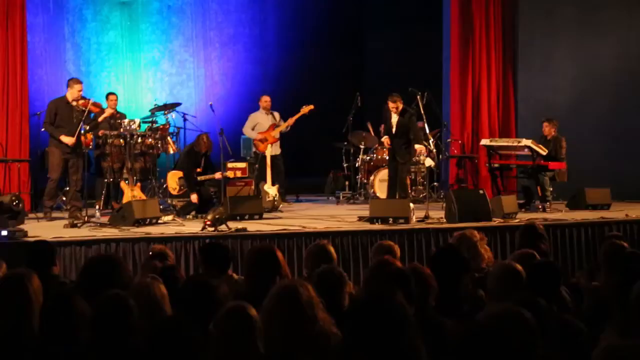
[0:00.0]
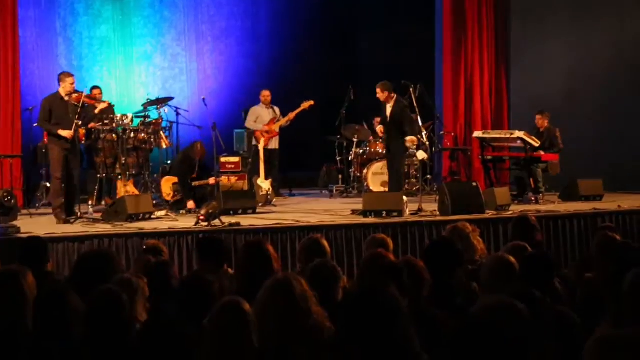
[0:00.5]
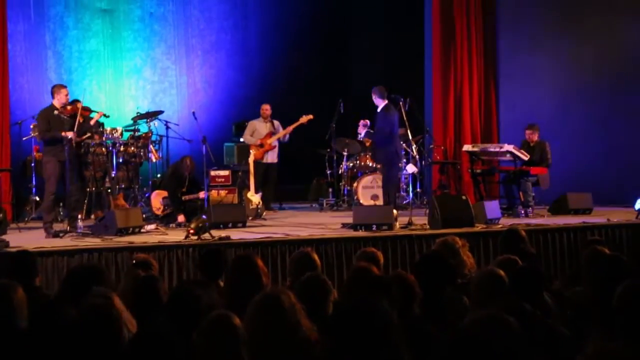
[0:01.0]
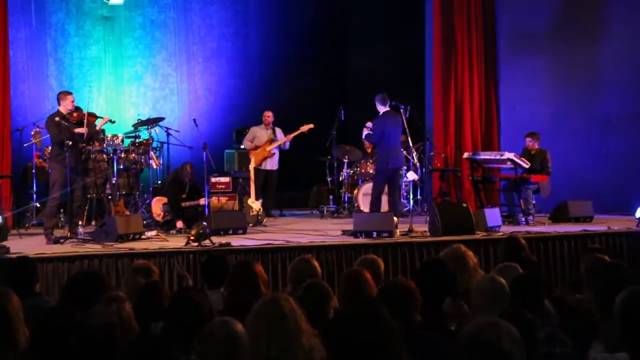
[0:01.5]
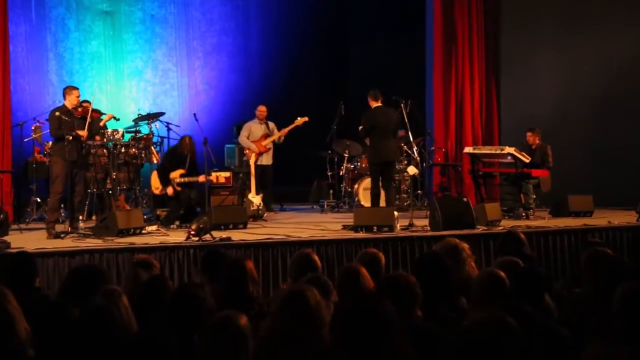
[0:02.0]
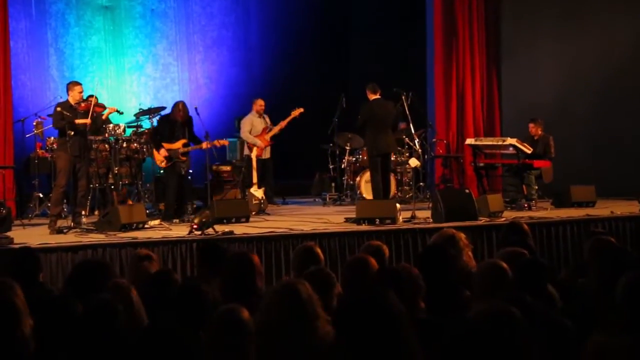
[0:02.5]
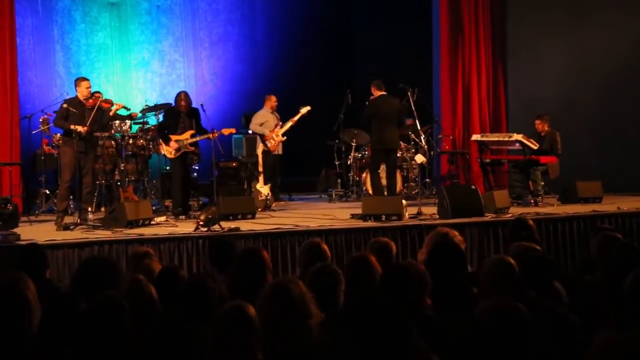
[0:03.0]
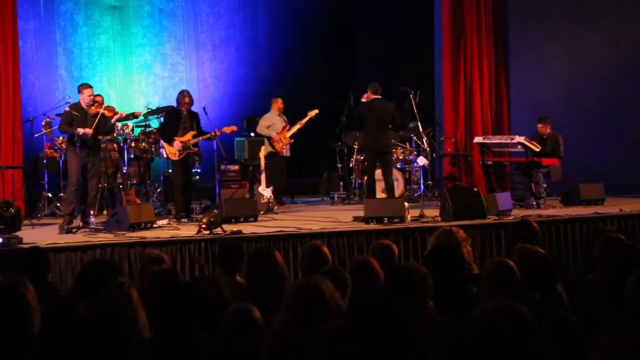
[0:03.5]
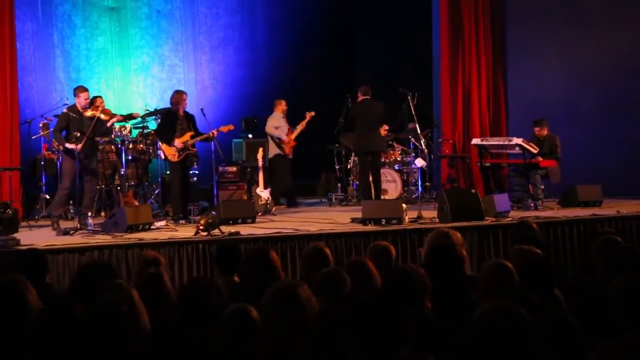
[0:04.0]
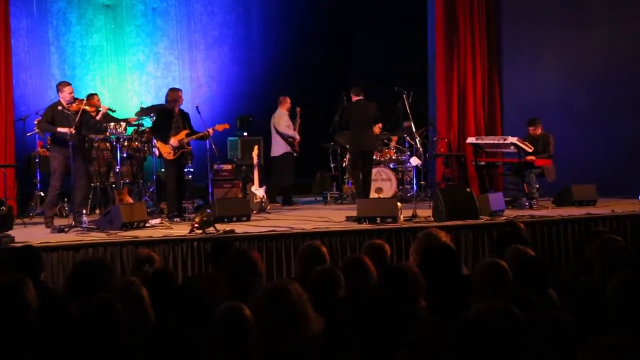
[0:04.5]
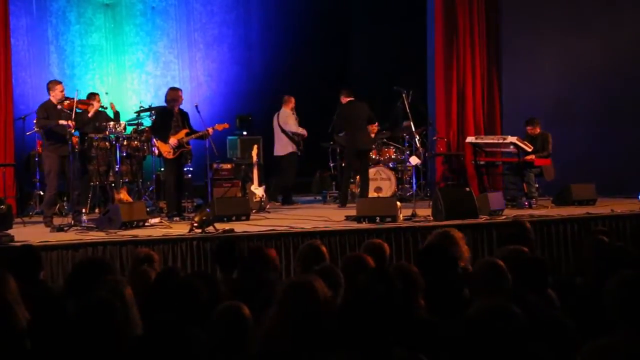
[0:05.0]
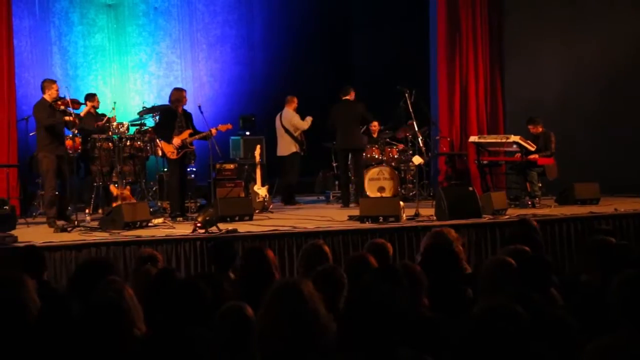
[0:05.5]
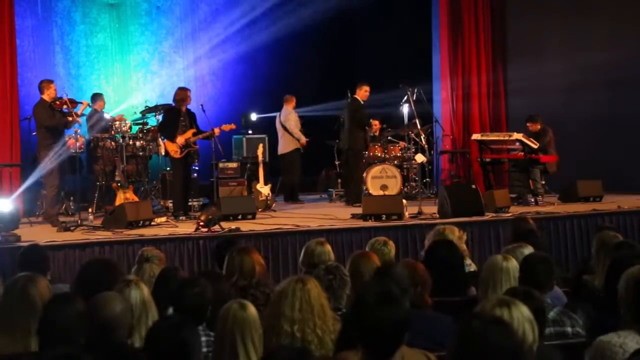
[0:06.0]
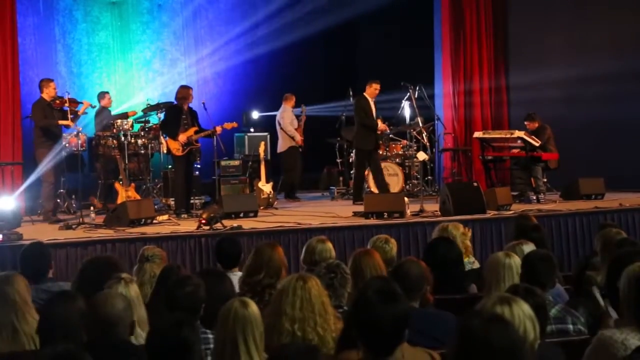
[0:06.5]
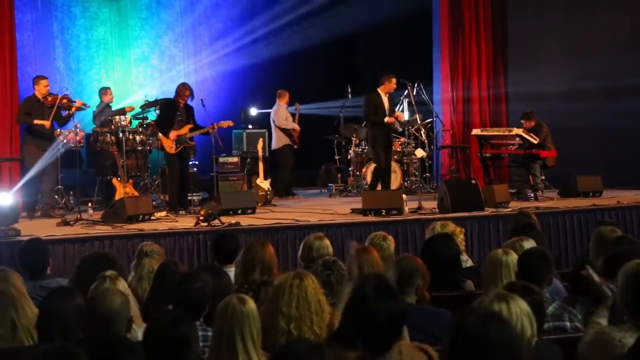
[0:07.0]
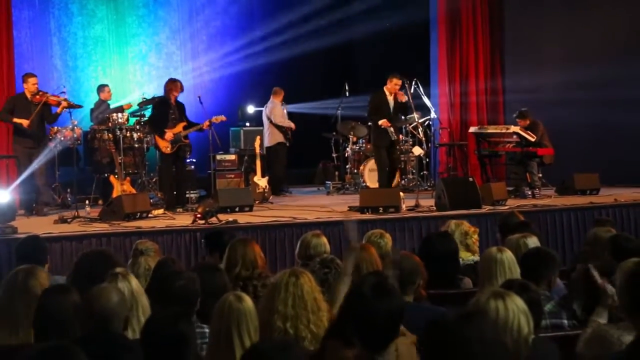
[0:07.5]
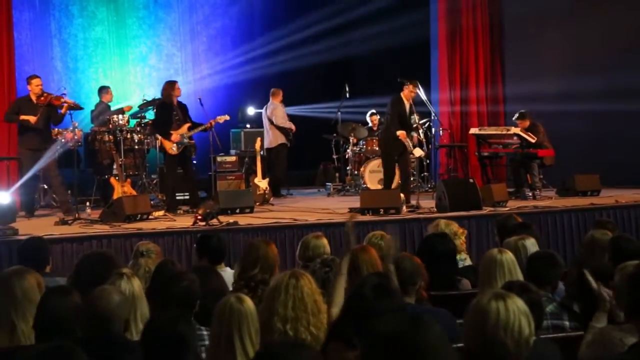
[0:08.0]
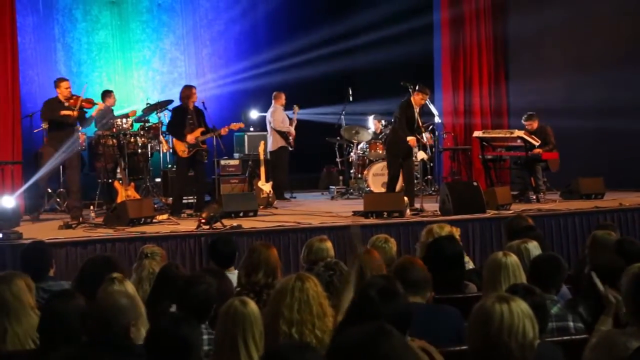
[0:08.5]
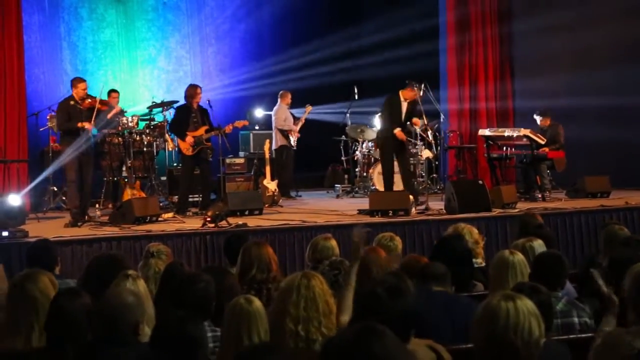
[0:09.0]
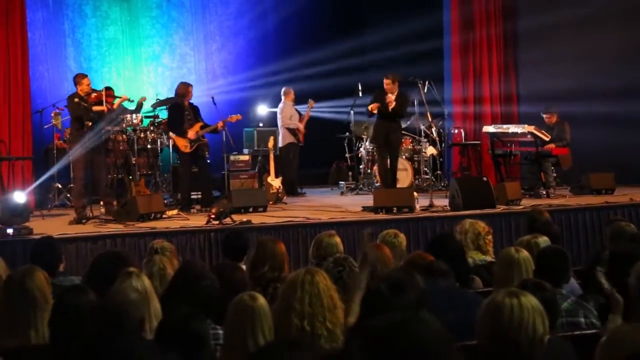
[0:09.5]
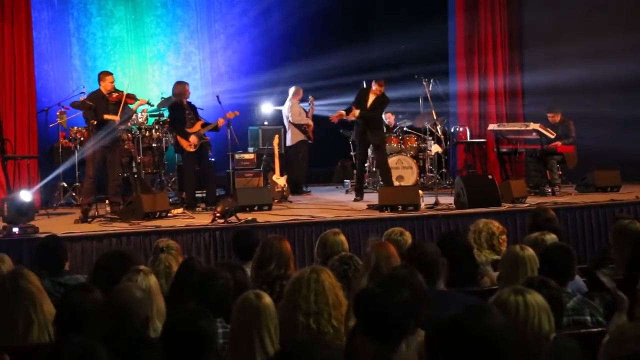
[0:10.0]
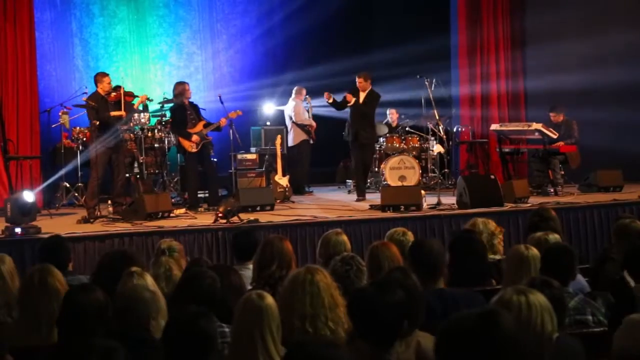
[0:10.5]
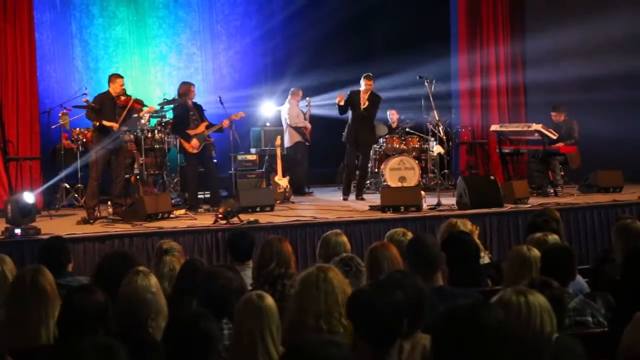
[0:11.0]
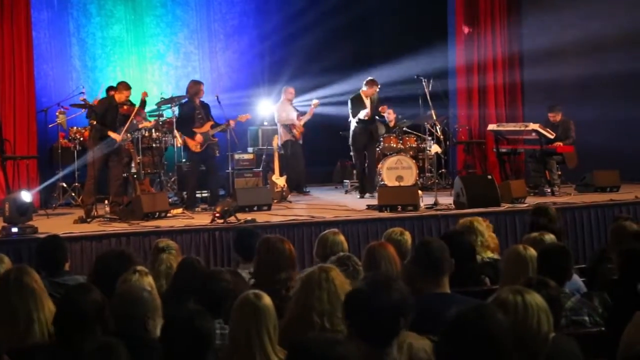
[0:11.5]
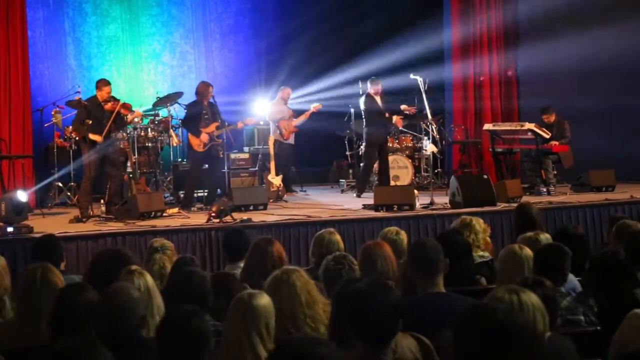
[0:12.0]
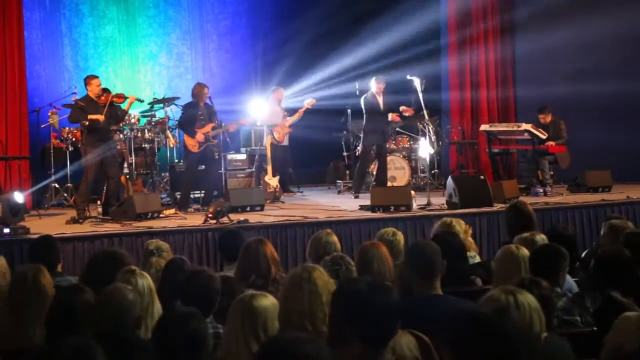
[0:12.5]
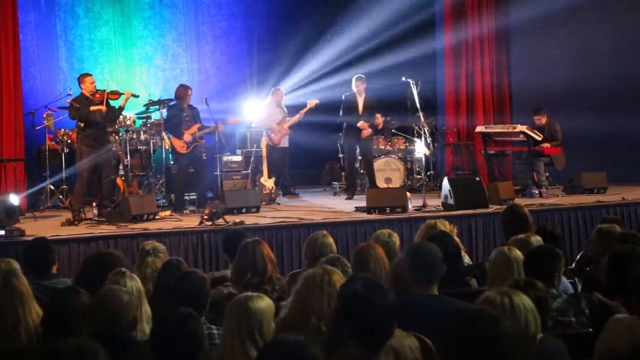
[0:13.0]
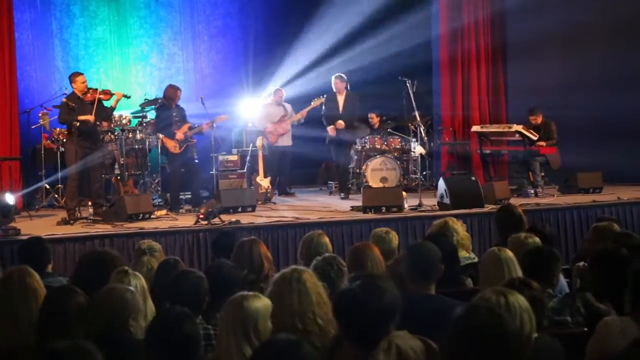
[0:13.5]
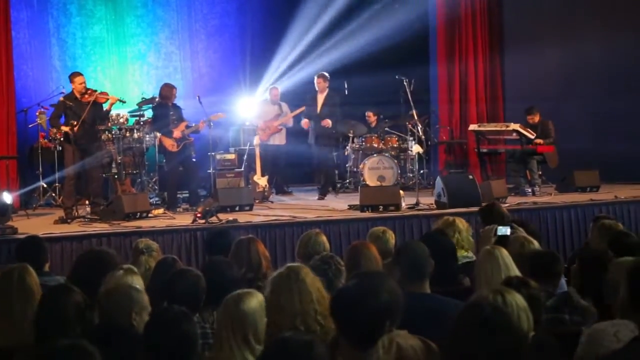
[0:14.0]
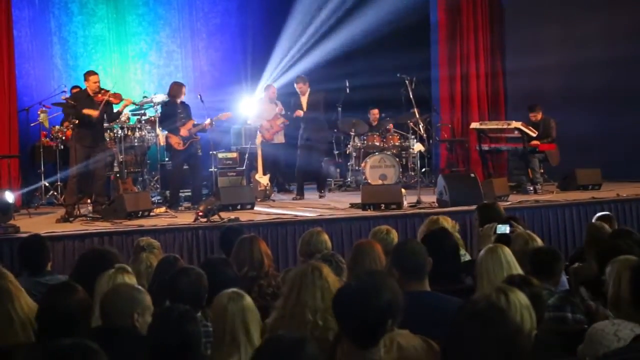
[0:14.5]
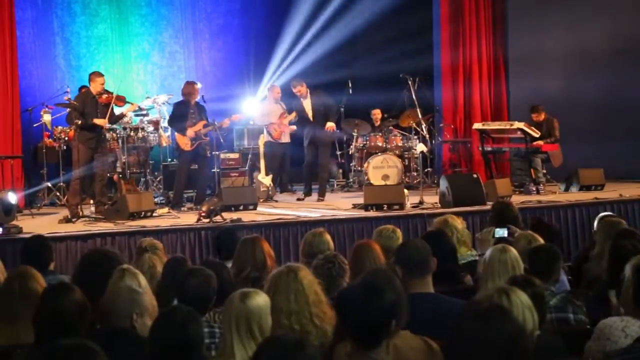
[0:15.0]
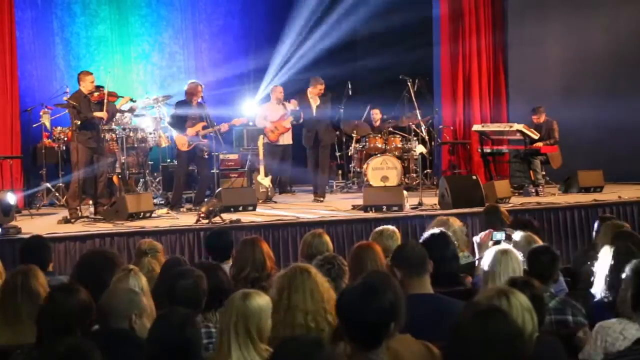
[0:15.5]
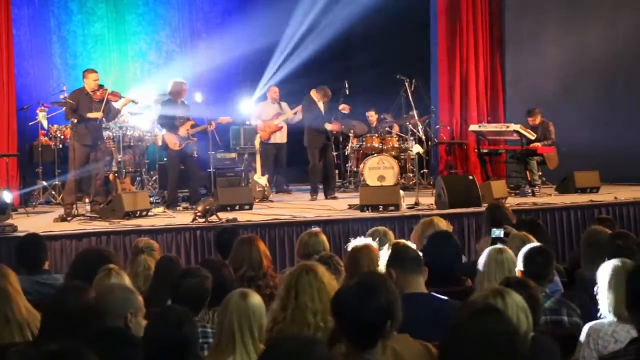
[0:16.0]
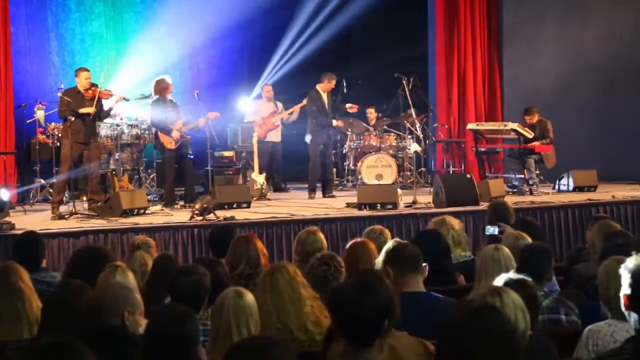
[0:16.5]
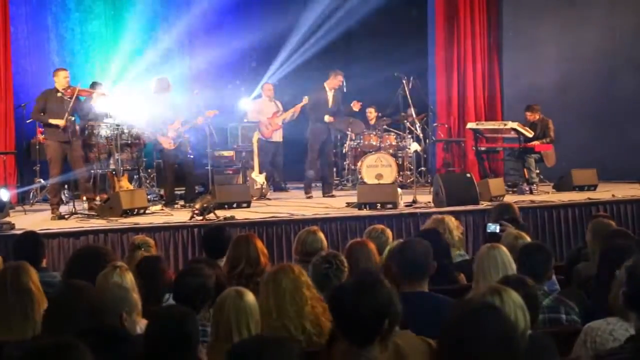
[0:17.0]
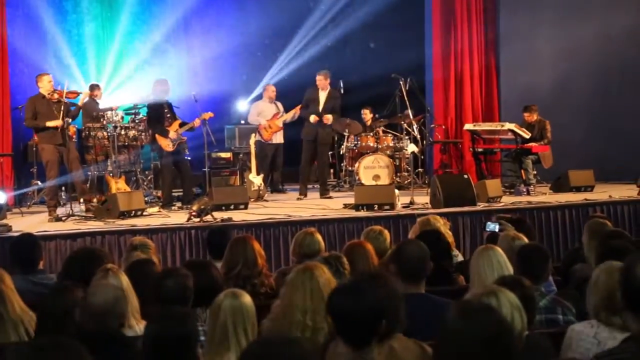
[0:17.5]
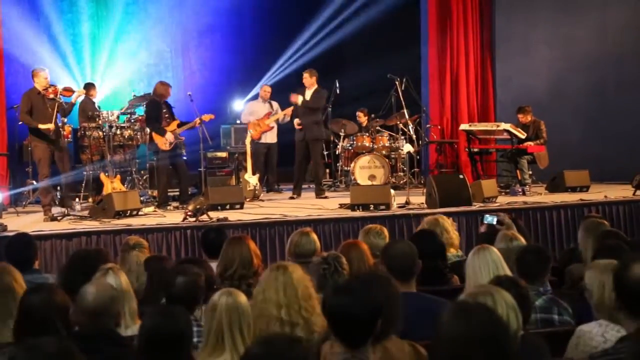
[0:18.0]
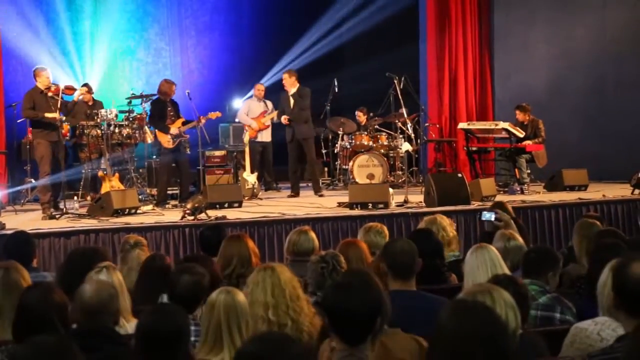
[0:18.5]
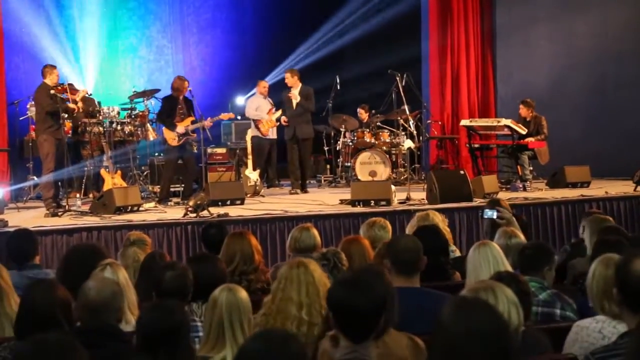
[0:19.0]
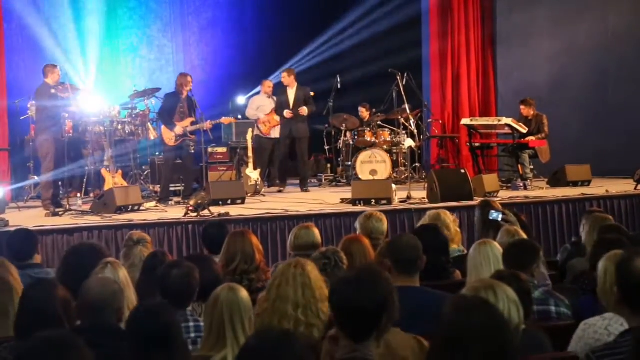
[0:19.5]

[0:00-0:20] A live band plays on an auditorium stage with red curtains in front of a large audience, who look to be in their mid-adult years, around thirties and up. The band has five or six people: a lead singer wearing a tux or a suit and tie, a violinist, a keyboardist on the right side of the stage, a drummer, a bass guitarist, and a regular guitarist; there are actually two drummers on stage, and the lead singer is also playing guitar. Spotlights are in the background, giving the stage a blue hue, and there are about six or seven speakers close to the edge of the stage. At the beginning, the lead singer does some kind of hand wave going to the left and the right side, then walks to the left side, doing some kind of dance move, and seems to be talking to his bandmates.